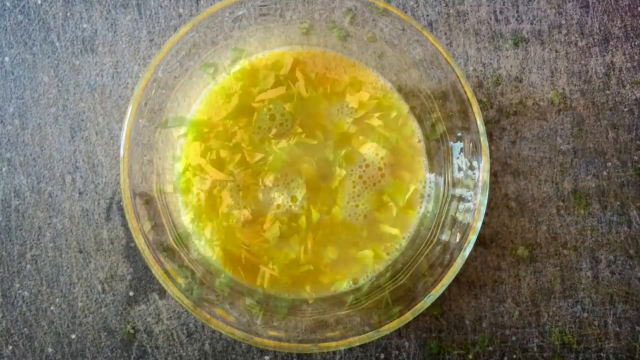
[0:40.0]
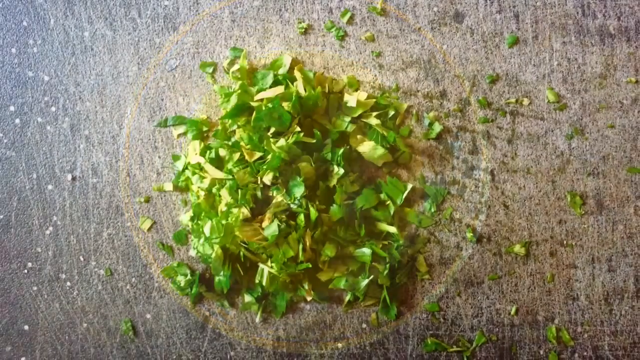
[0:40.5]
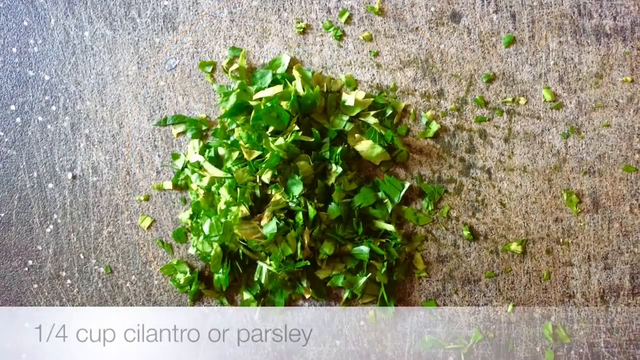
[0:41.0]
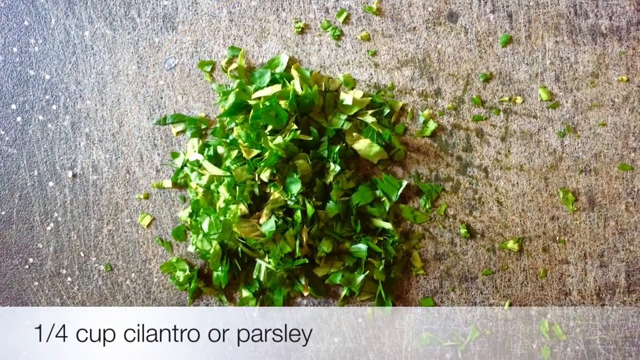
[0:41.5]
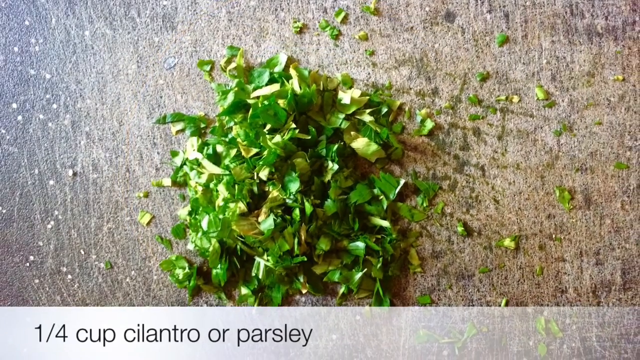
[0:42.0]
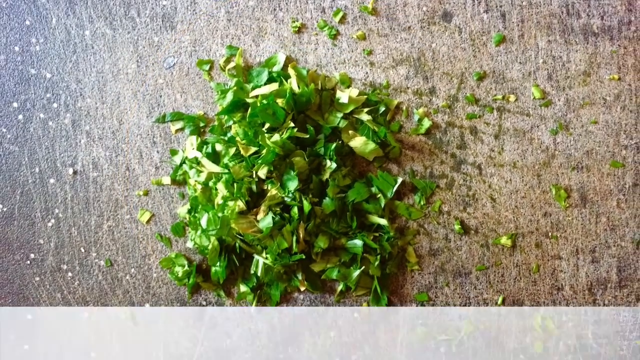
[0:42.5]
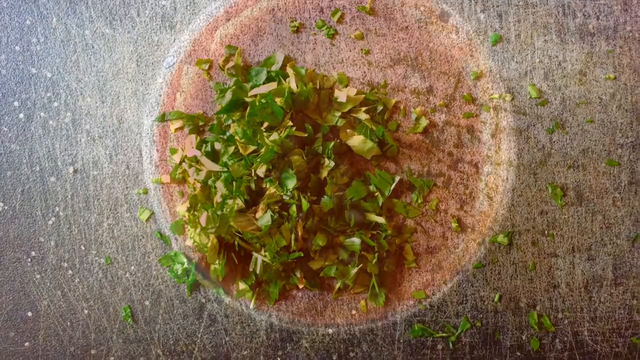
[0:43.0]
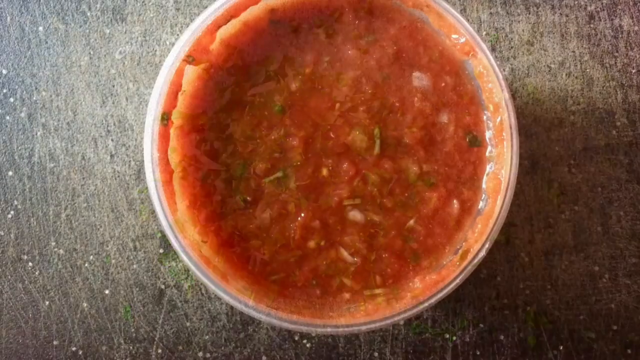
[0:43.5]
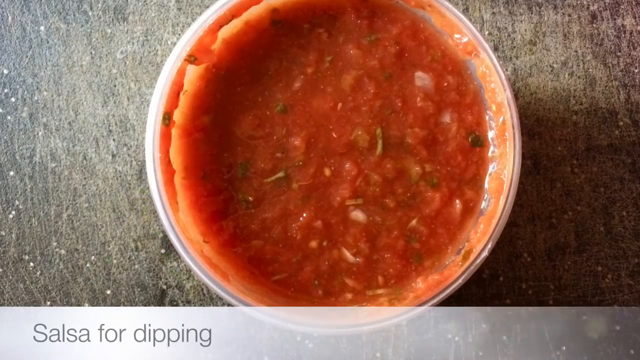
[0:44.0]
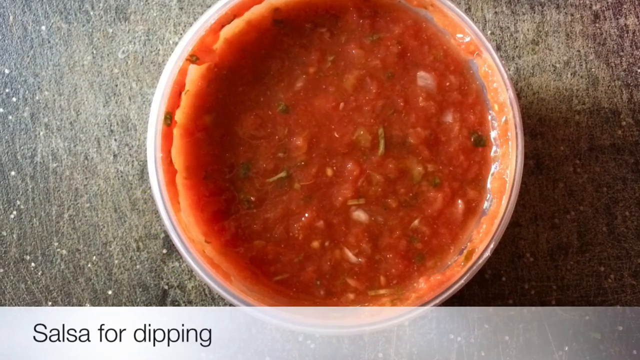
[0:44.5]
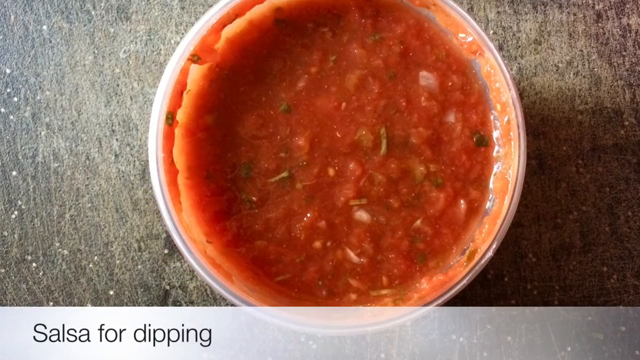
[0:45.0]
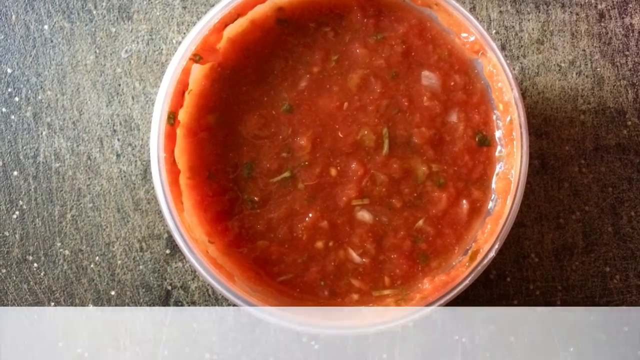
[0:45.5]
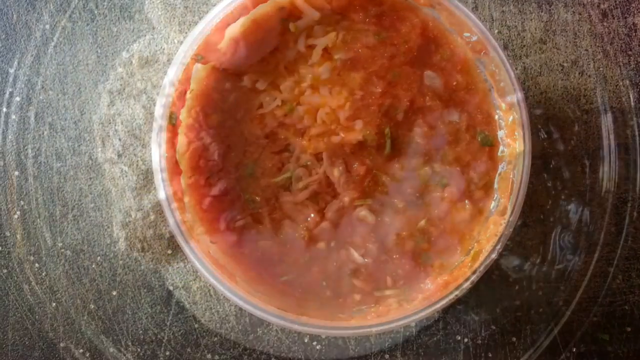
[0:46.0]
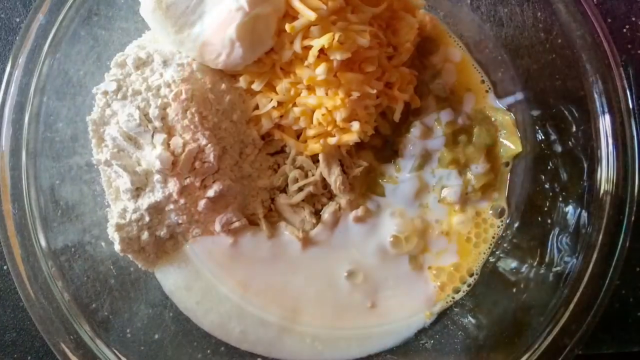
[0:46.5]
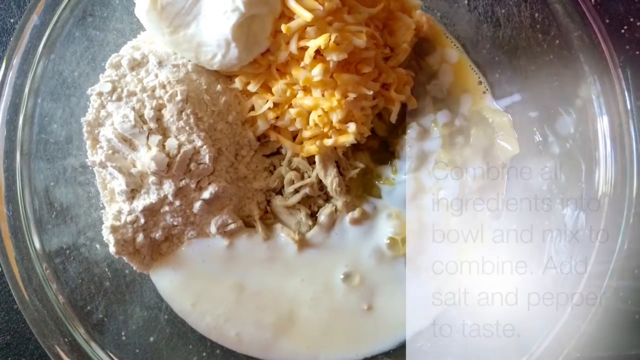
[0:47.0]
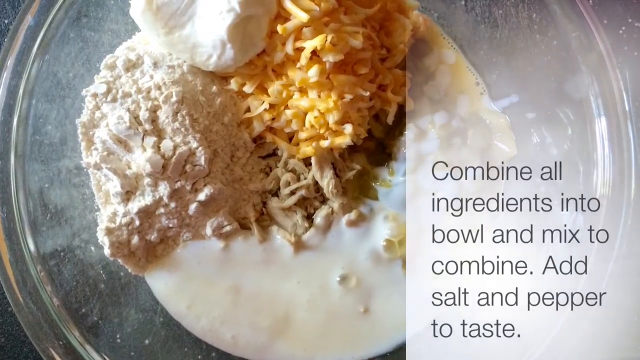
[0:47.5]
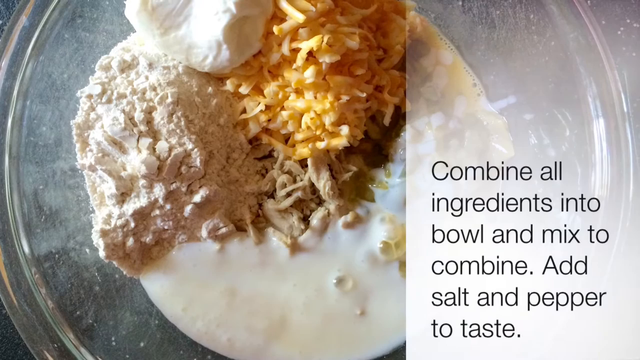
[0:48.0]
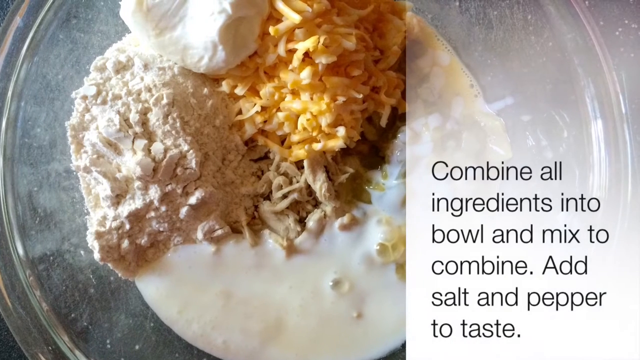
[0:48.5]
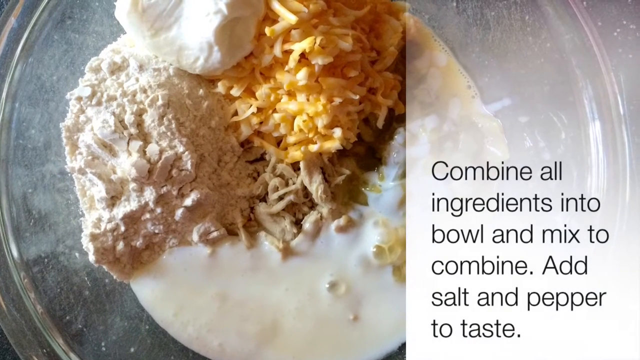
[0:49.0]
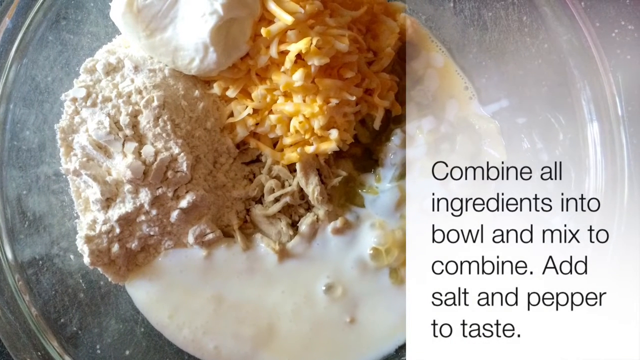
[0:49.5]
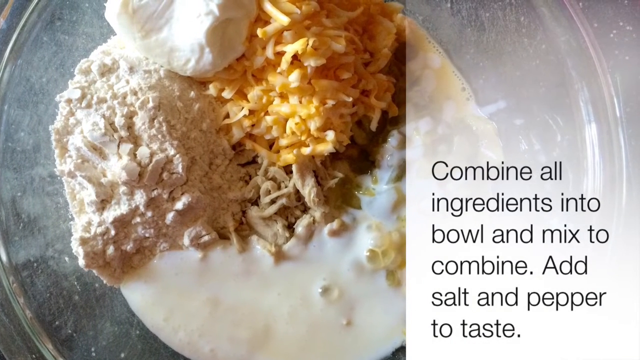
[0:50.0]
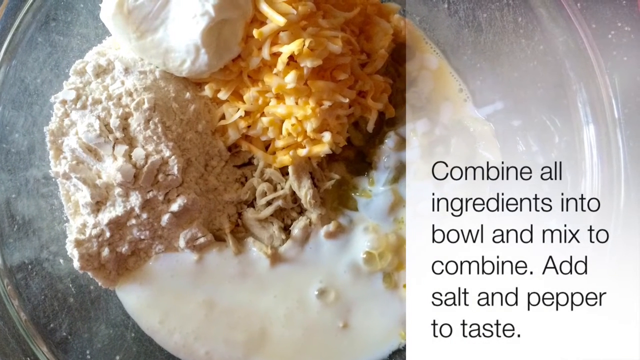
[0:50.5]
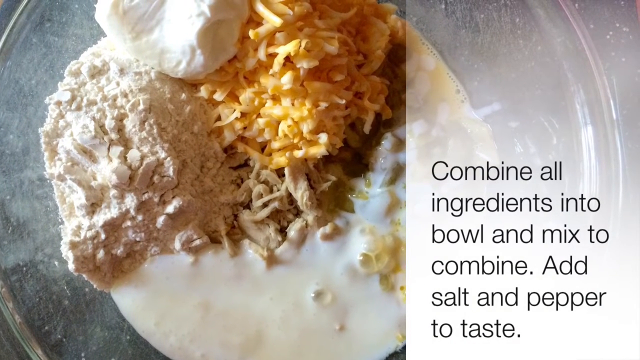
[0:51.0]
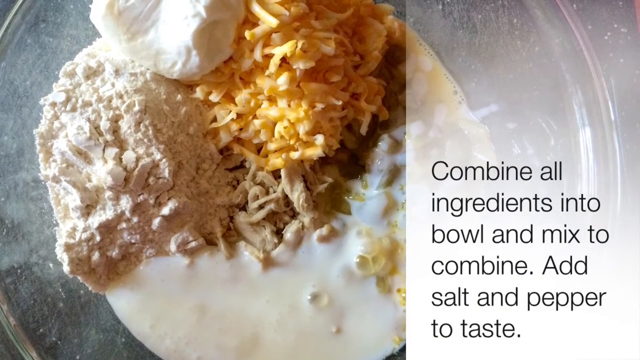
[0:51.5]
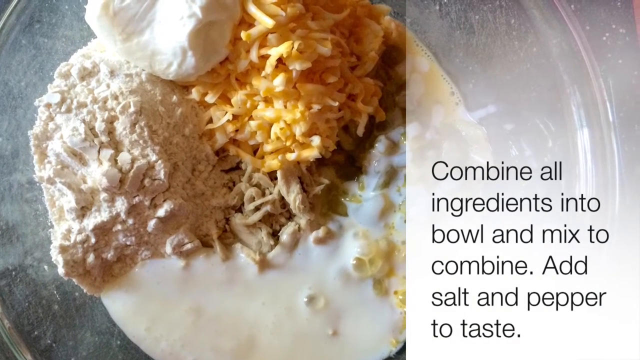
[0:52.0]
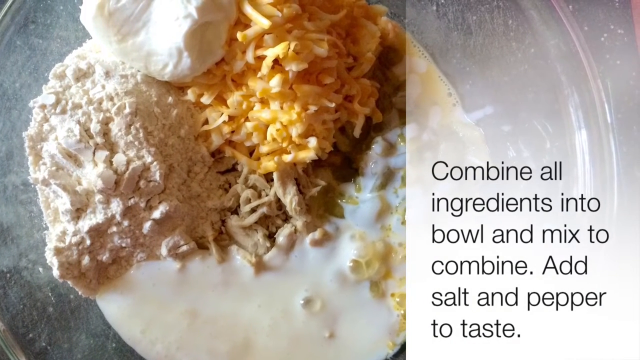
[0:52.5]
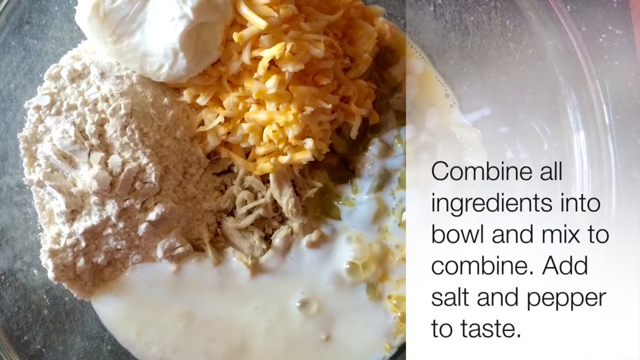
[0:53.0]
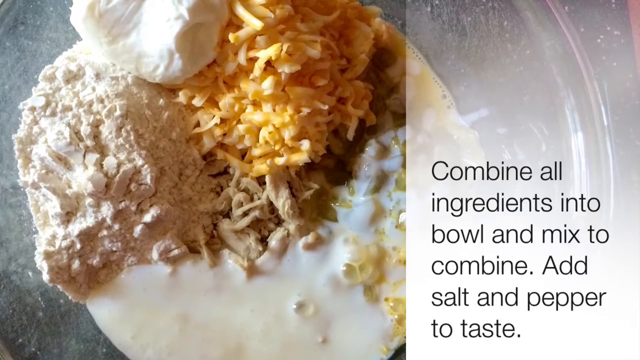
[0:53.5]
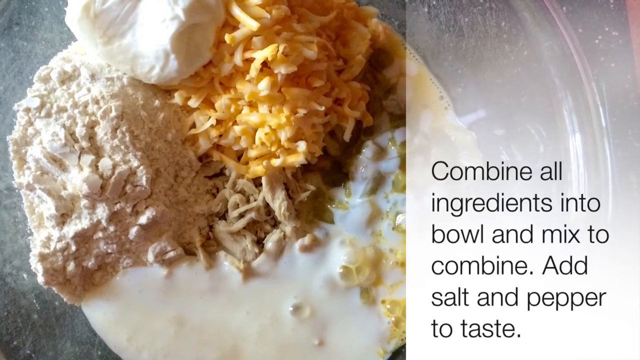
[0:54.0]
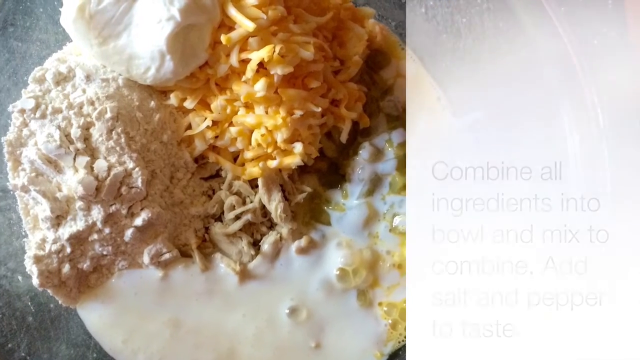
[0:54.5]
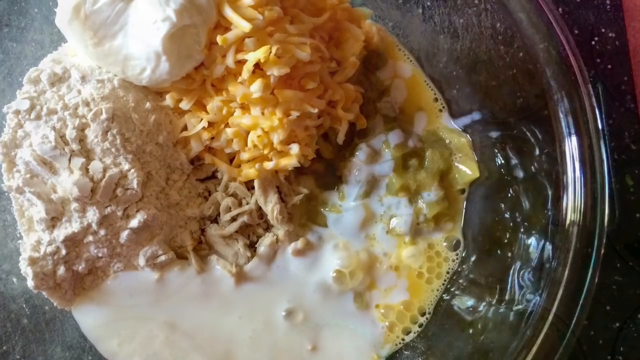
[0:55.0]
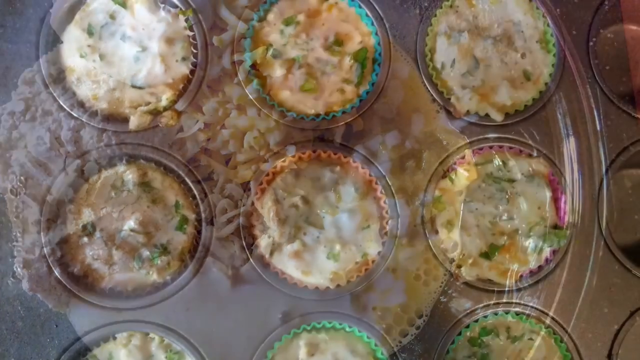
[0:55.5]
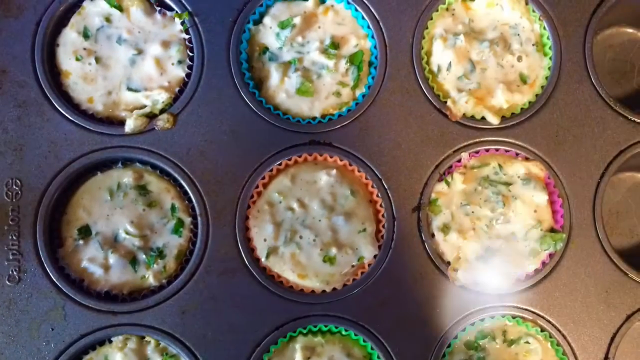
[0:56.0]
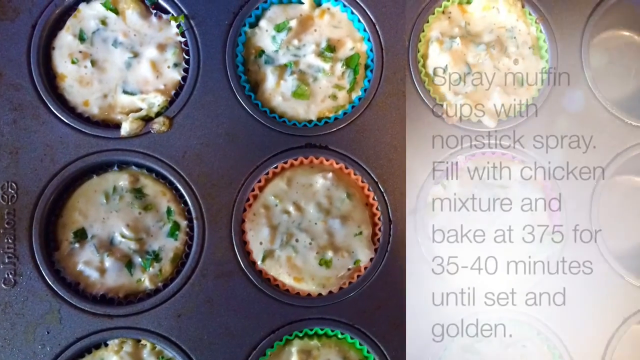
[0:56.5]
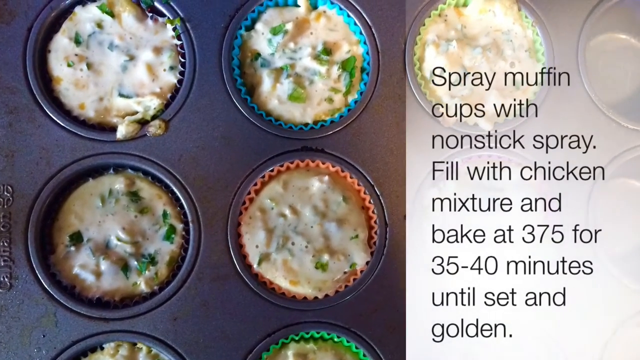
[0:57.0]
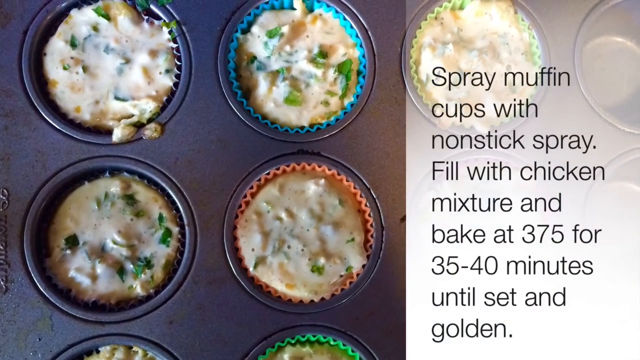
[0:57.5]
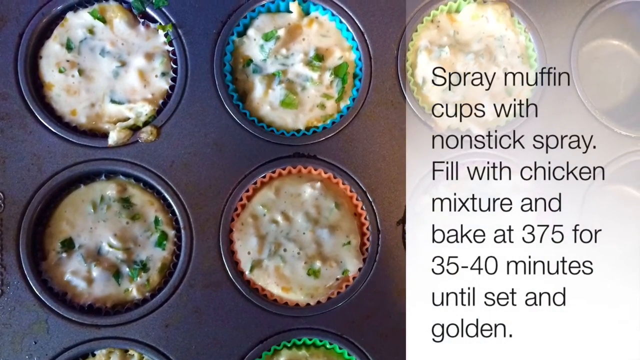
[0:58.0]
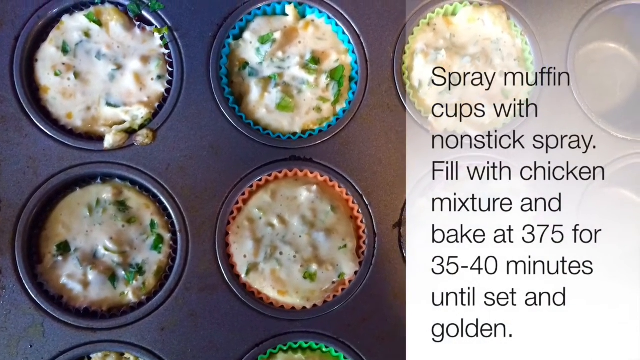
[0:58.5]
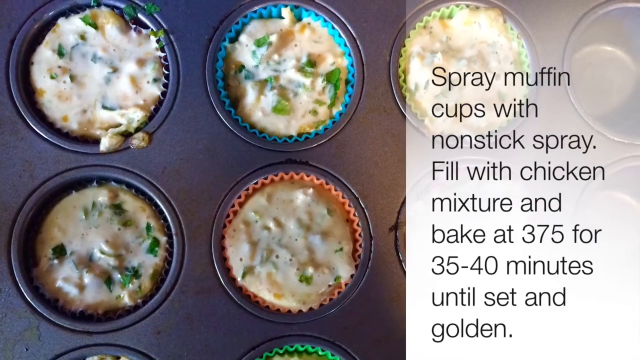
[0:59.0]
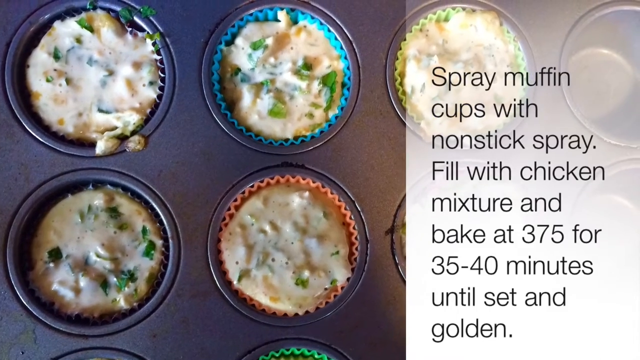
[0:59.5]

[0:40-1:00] What looks like a bowl of salsa is shown, and by another bowl the text says "combine all the ingredients into the bowl and mix and combine" and "Add the salt and pepper to taste". There appears to be some flour and some cheese. Then a muffin tin is shown with the text "Spray muffin cups with nonstick spray", "fill with chicken mixture and bake at 375 for 35 to 40 minutes" and "until set and golden". Each cup has a paper muffin liner. As they cook, different colors are visible in the mixture, including greens. Everything appears to be on some type of cement counter.